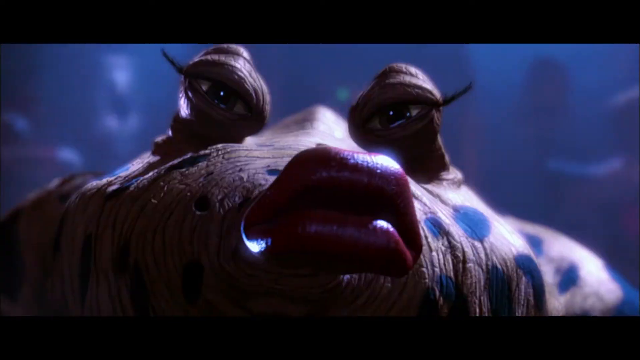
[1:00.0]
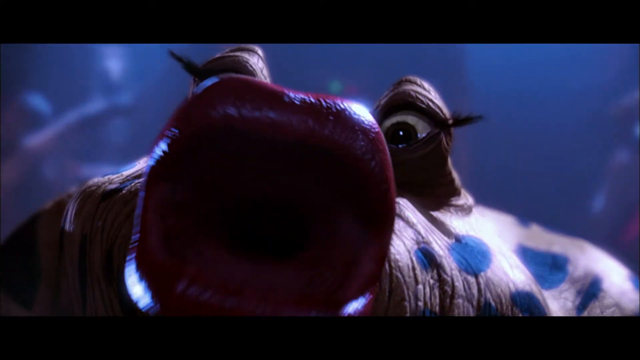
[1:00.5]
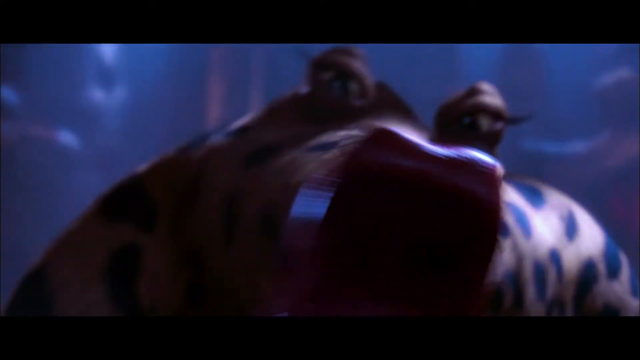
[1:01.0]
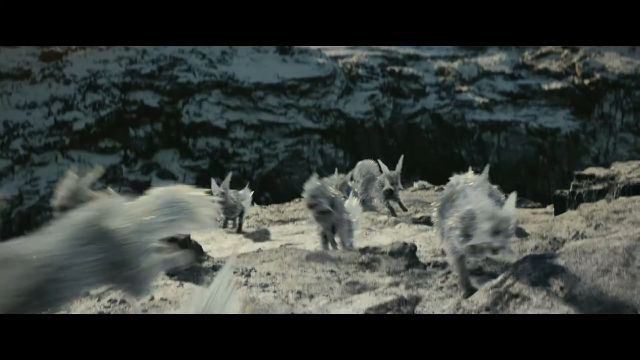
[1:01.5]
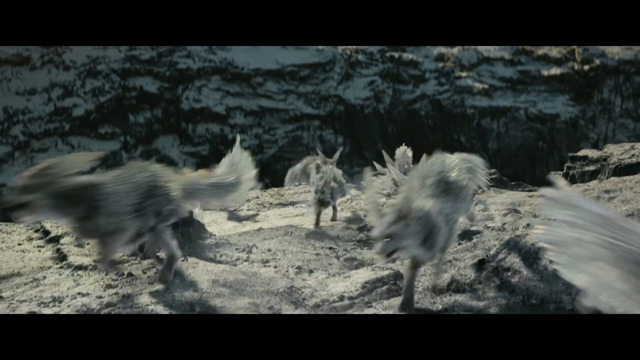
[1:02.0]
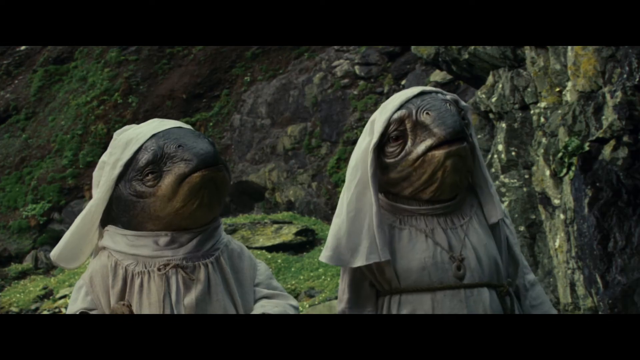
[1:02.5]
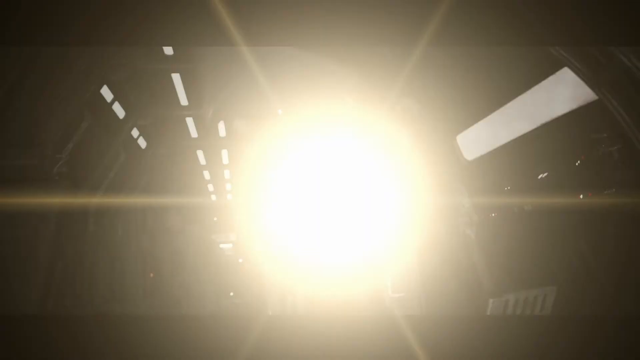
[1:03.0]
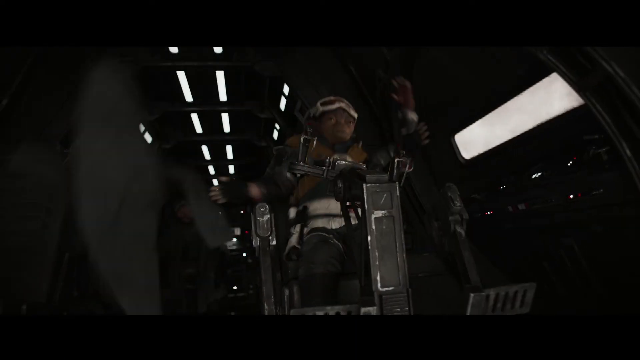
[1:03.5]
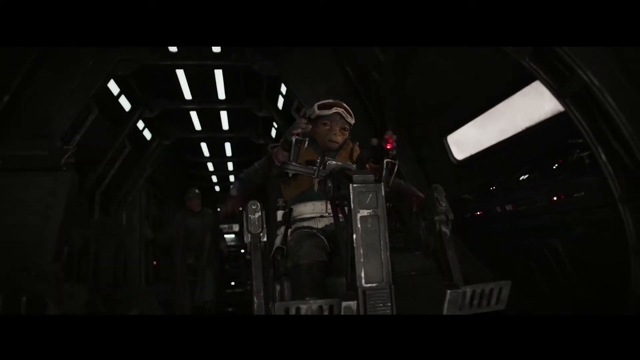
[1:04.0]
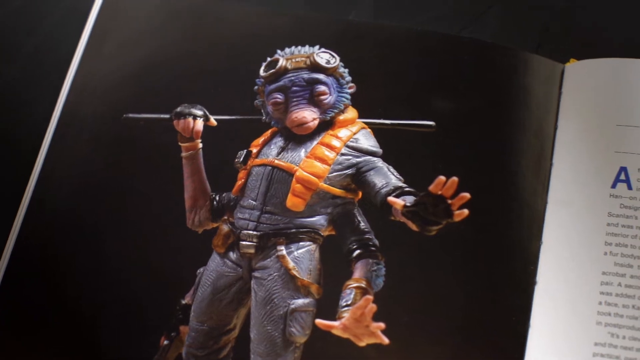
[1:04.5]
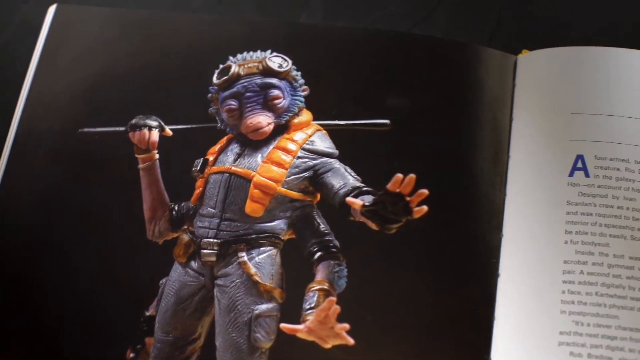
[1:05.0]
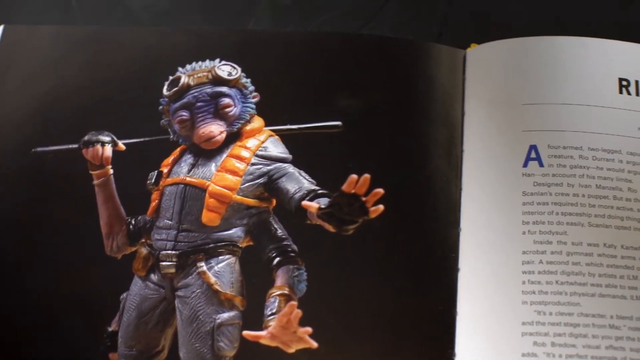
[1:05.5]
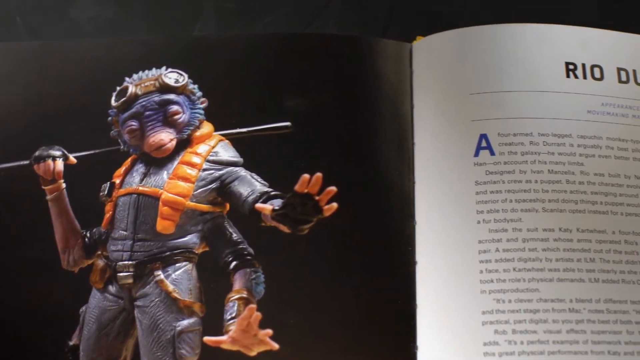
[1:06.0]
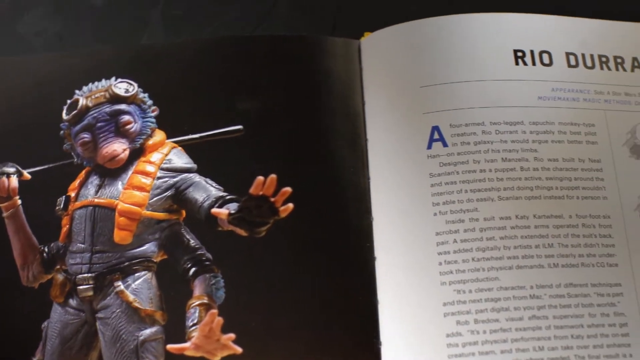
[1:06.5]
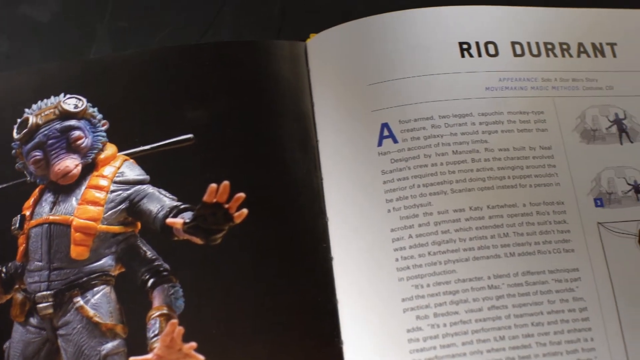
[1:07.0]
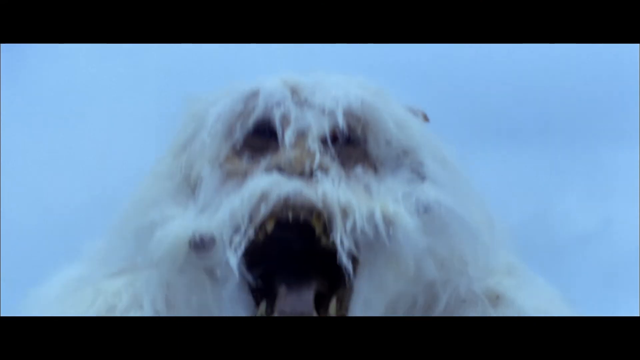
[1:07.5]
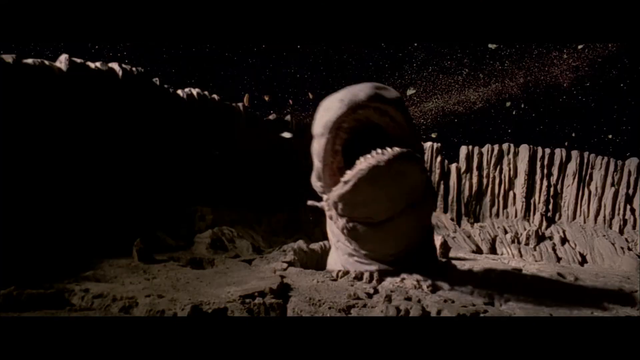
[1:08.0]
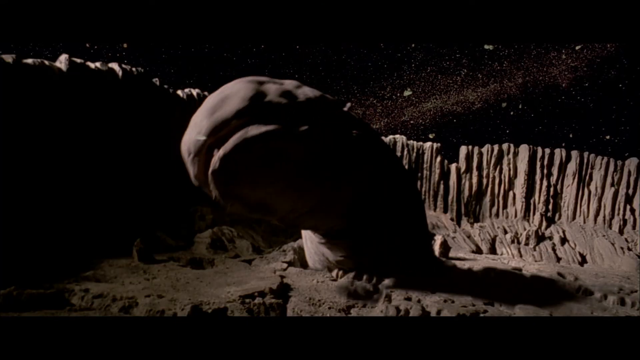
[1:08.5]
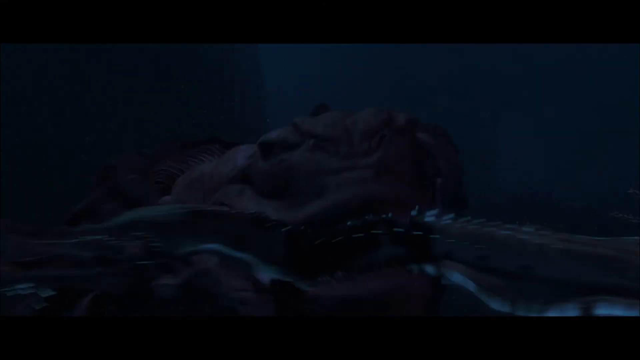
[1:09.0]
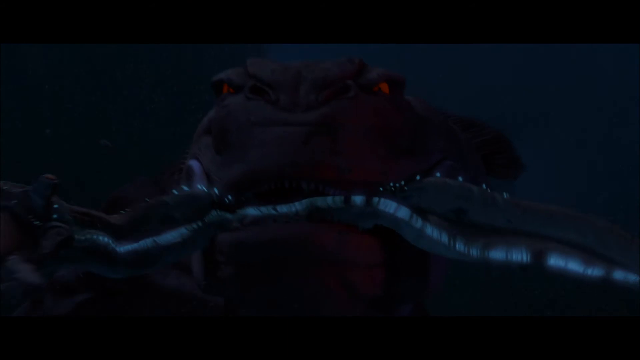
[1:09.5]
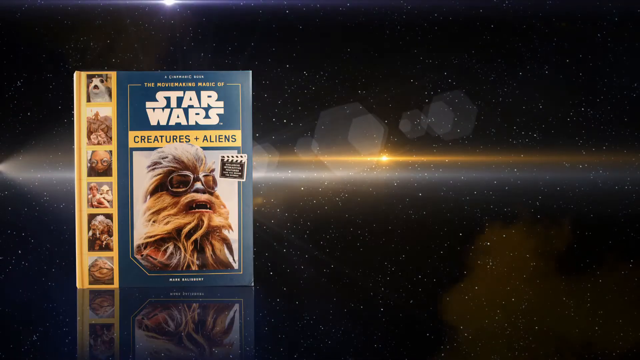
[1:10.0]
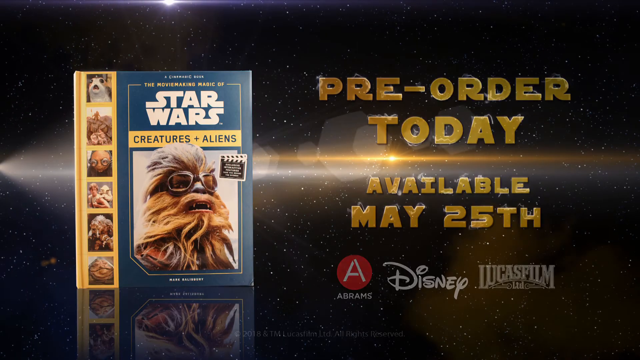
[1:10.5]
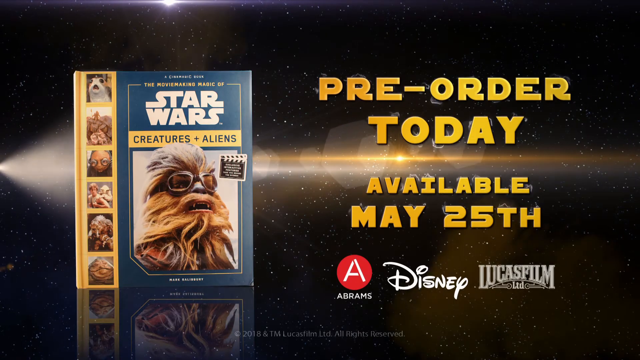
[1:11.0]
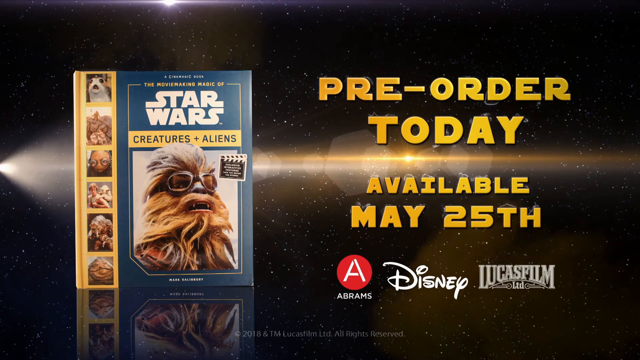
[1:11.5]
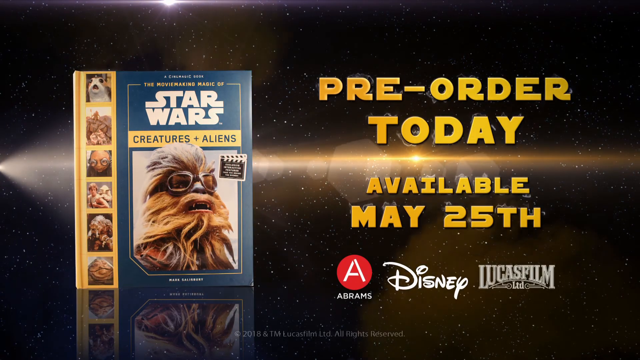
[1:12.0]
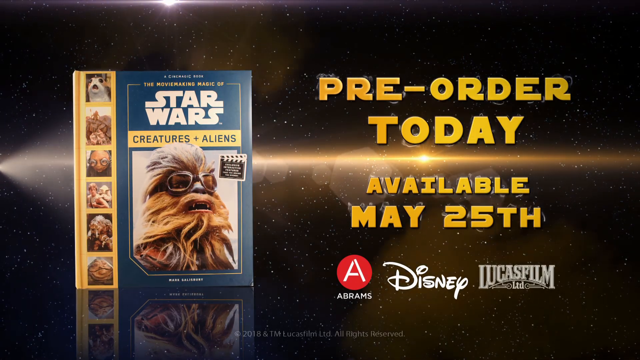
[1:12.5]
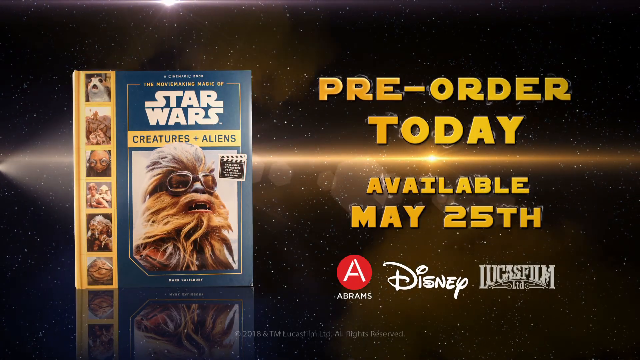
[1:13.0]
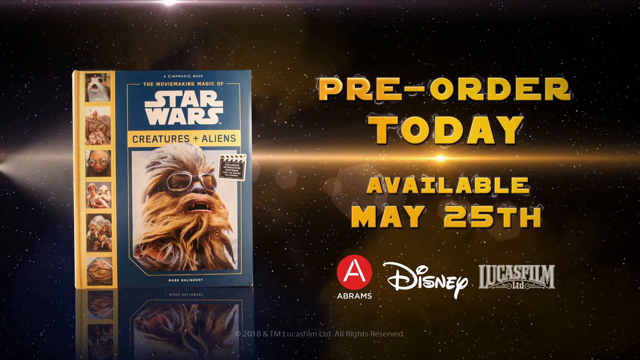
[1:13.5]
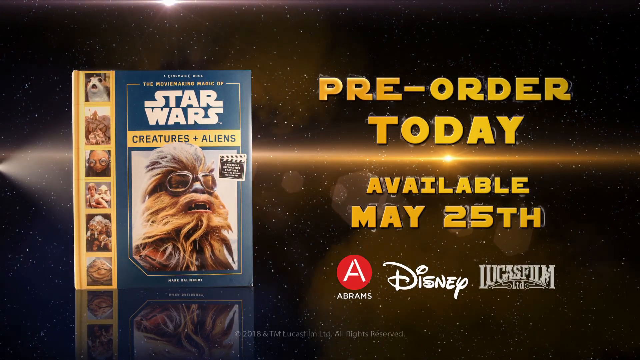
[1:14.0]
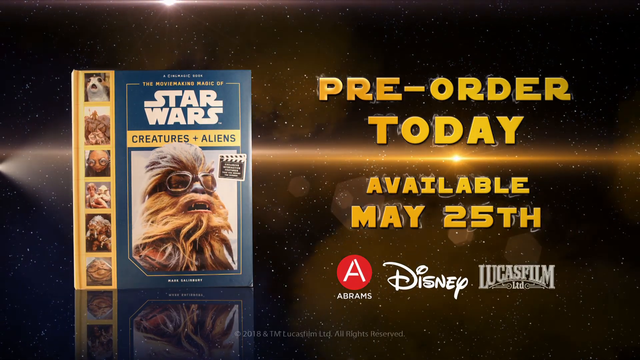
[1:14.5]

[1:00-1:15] A very creepy-looking pink creature from Star Wars appears, followed by other Star Wars characters as portrayed in the movies. A page inside a book shows a monkey-like creature wearing a suit with a yellow design; its name is written in the book as "Ryo Durant". Next come a snow creature that looks like Bigfoot and a giant worm-like creature. Lastly, a book titled "Star Wars Creatures plus Aliens" is shown with the words "Pre-order today, available May 25th", and the logos of Lucasfilm, Disney and A-Drams appear underneath these words.